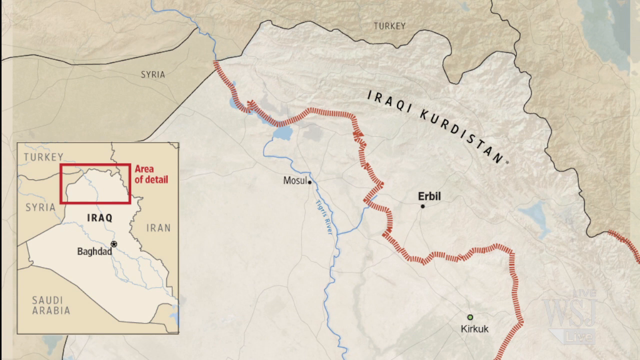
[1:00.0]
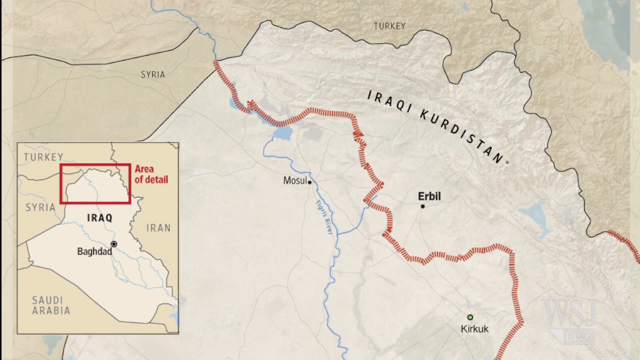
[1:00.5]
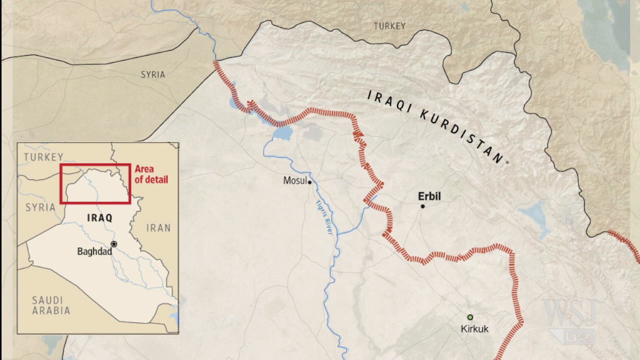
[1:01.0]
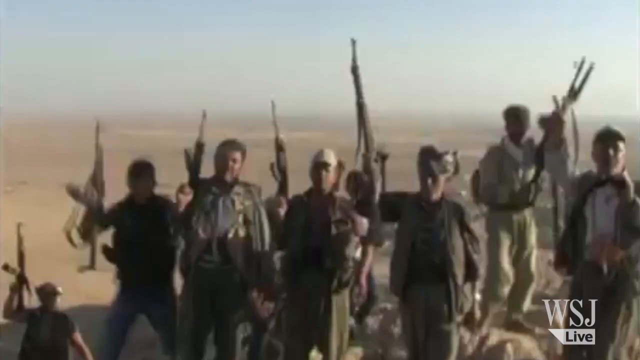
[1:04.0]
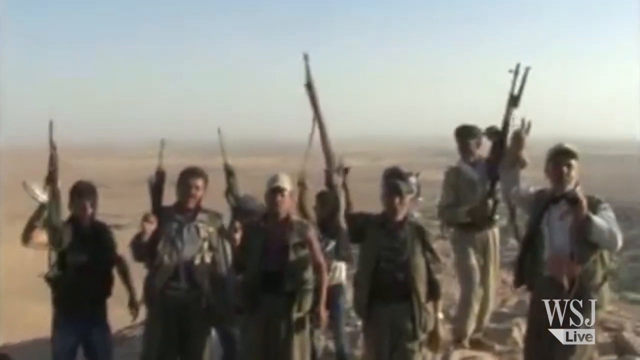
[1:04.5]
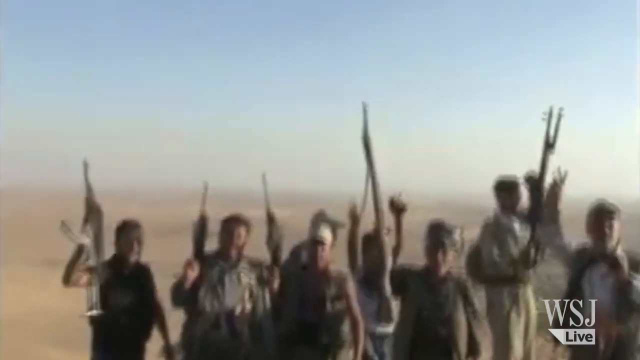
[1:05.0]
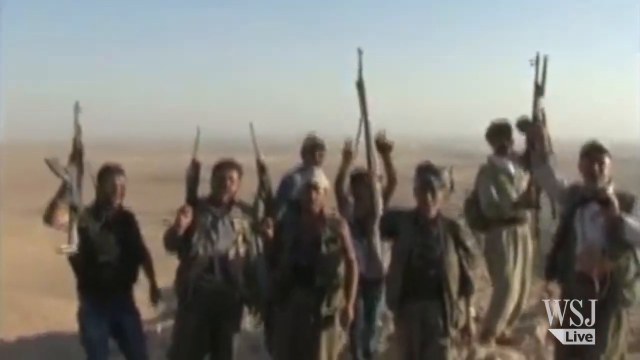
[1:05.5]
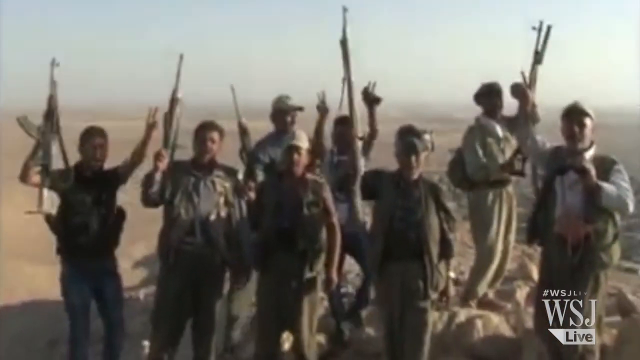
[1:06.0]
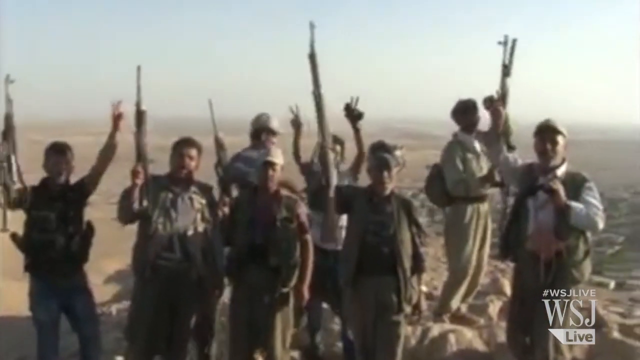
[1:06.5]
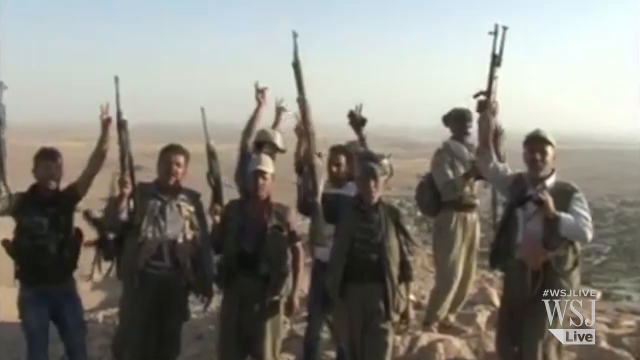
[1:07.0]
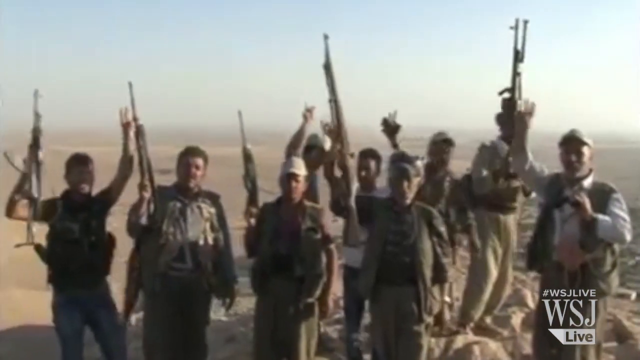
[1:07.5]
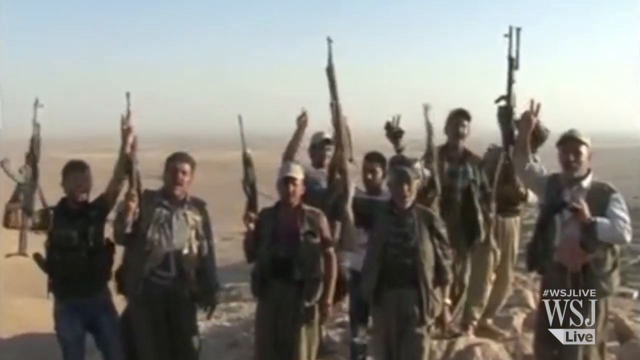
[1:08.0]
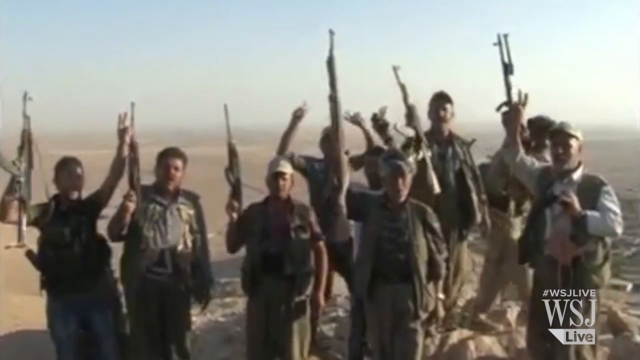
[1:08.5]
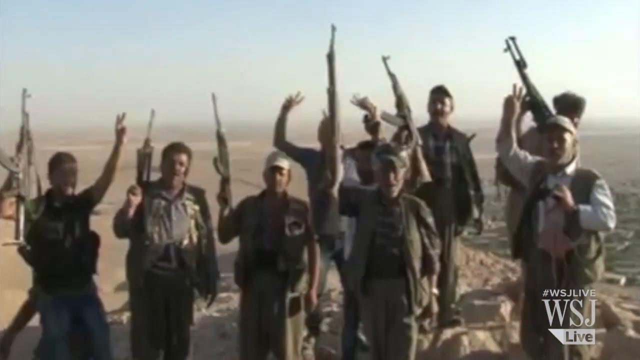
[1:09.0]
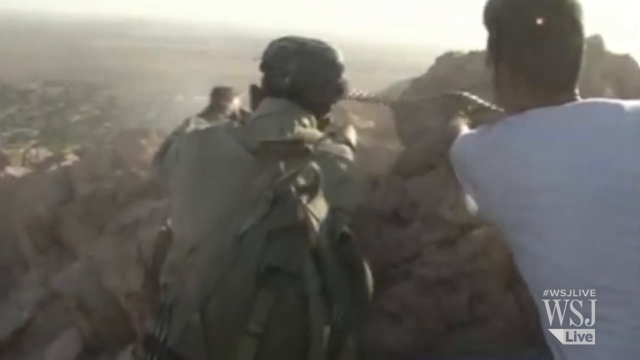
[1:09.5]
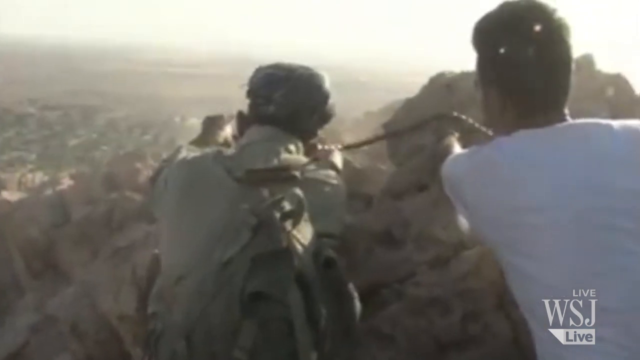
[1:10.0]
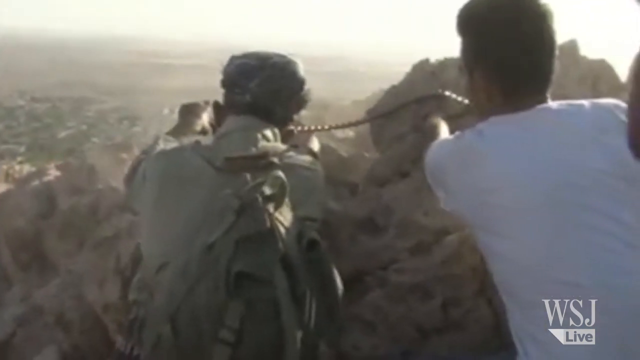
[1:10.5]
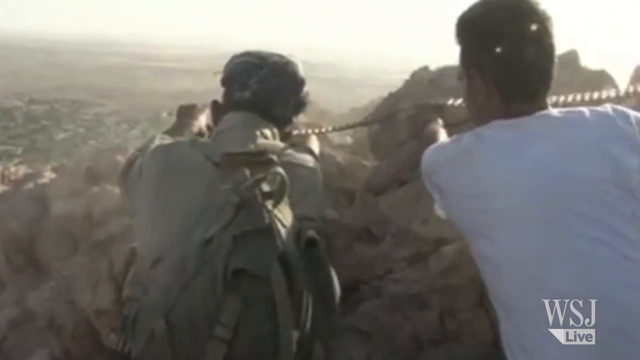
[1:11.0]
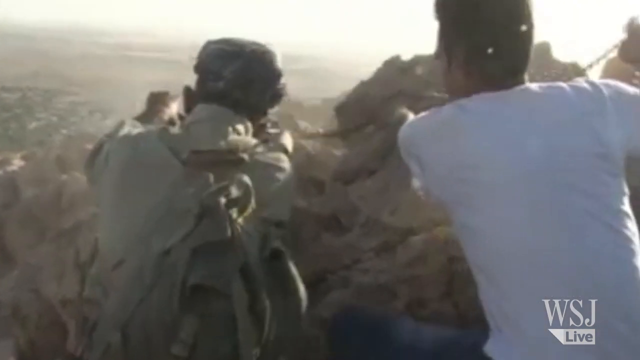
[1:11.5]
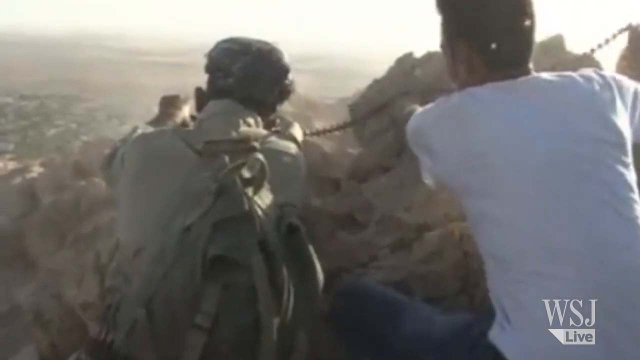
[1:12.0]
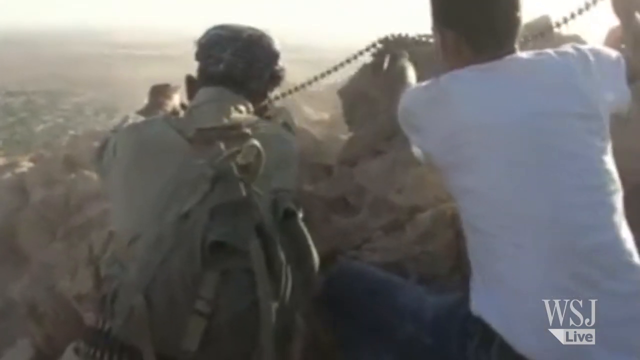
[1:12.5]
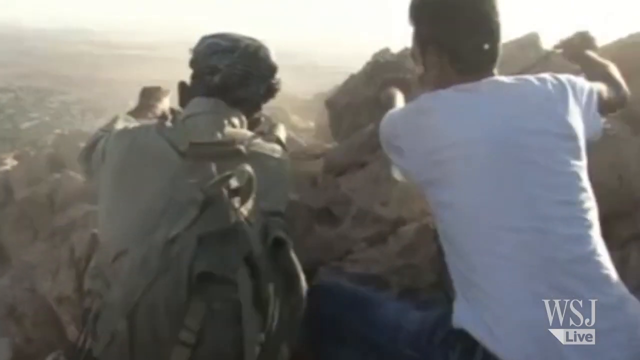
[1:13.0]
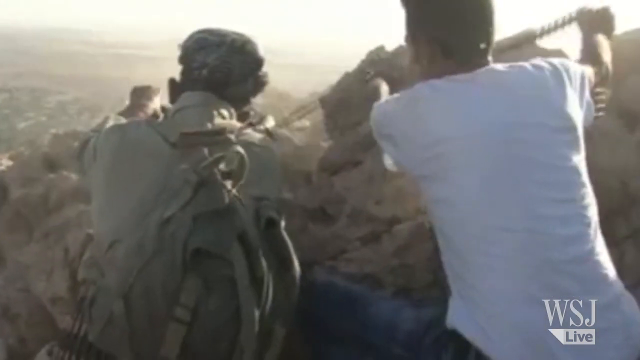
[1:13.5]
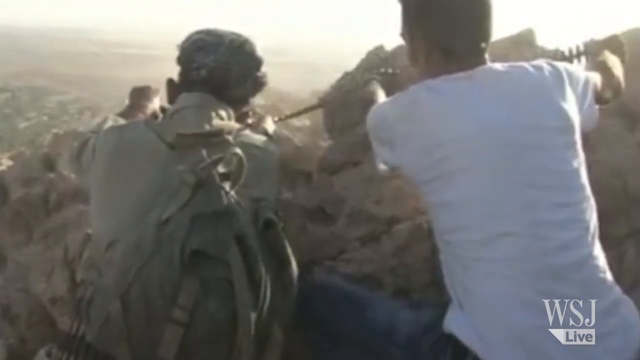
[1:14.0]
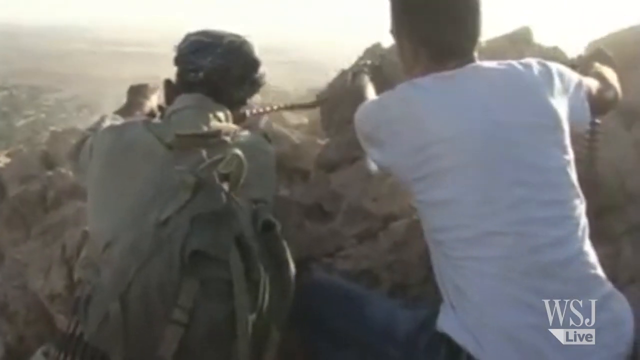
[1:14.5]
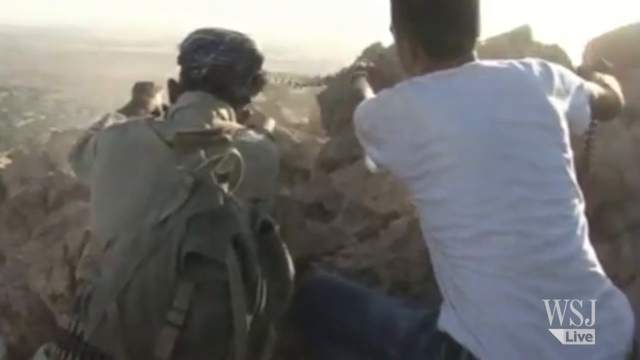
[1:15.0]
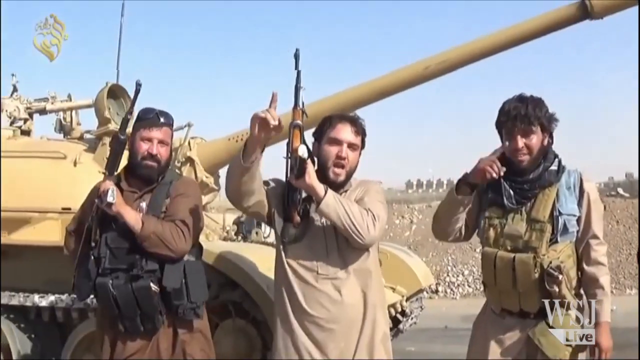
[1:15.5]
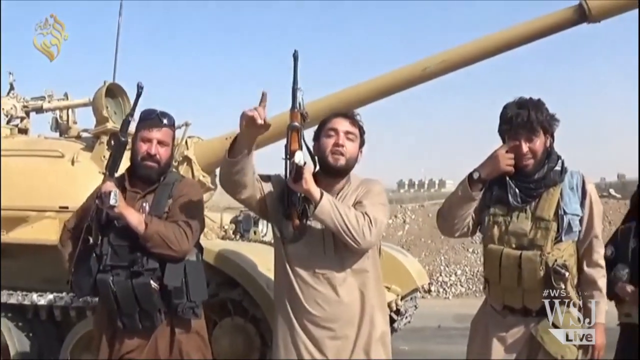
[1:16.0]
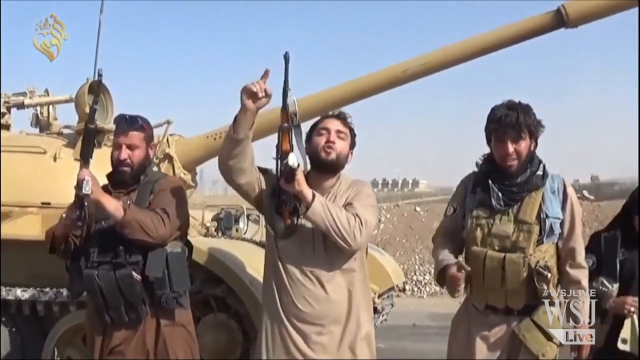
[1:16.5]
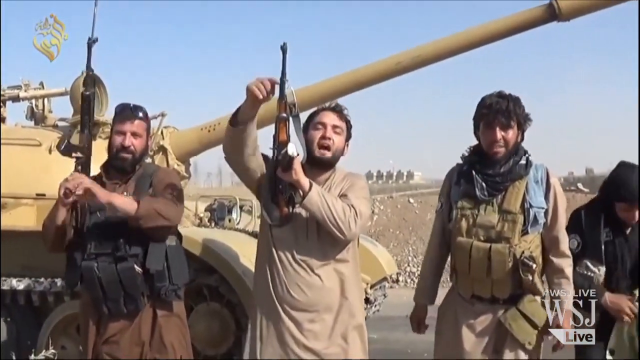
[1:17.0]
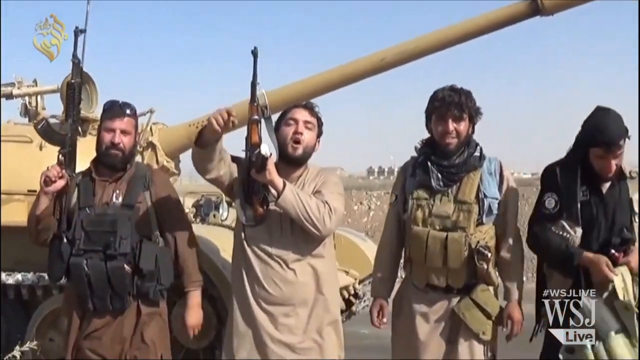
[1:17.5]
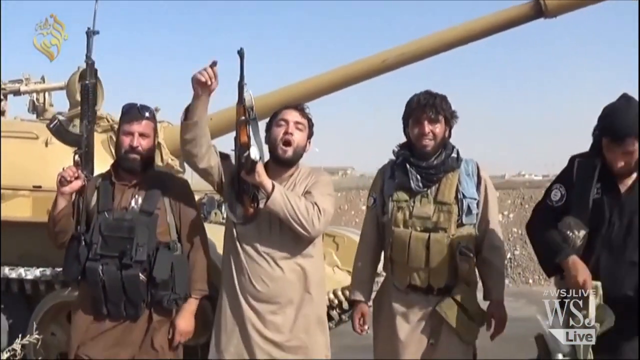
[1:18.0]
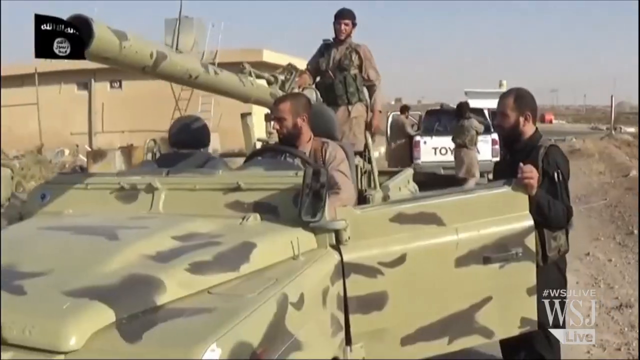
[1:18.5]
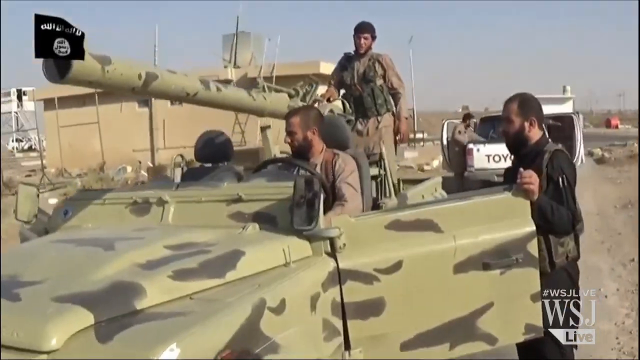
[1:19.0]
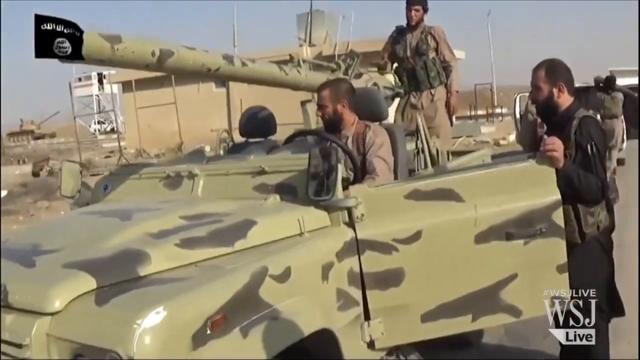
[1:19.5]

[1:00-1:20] A map of Iraq appears, with Iraq at the bottom, a little of Turkey in the upper left, a little of Syria on the right, and a smidgen of Iran in the upper right corner. The map is in various shades of tan, with Iraq slightly lighter. In the lower left is a zoomed-out inset of all those countries with a red box marking the larger map's area, and red text to its right reads "area of detail". The video then shows a bunched-up group of soldiers, apparently Iraqis, mostly in camo, holding assault rifles in their right hands and aiming them into the sky; they seem to be cheering. Desert and a clear blue sky are behind them. Another shot shows two men facing away from the camera firing guns, apparently doing target practice.